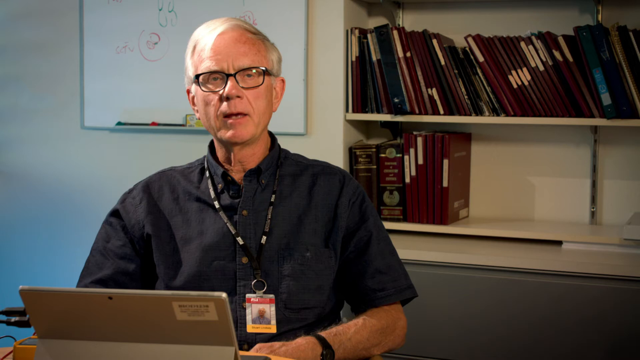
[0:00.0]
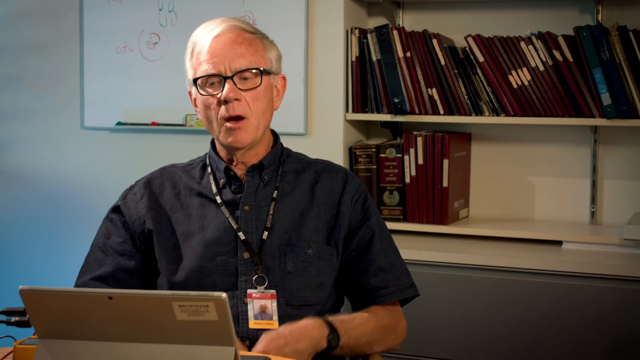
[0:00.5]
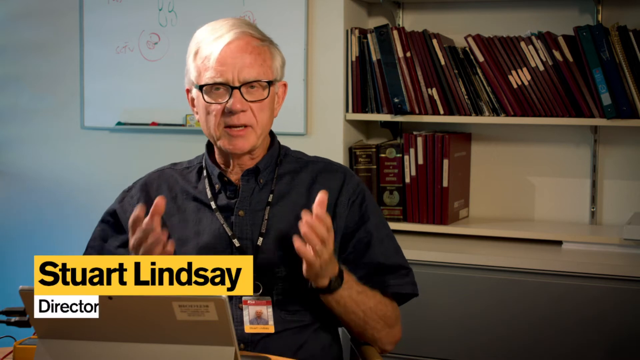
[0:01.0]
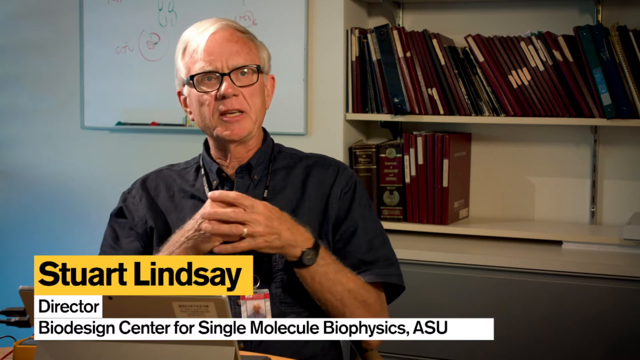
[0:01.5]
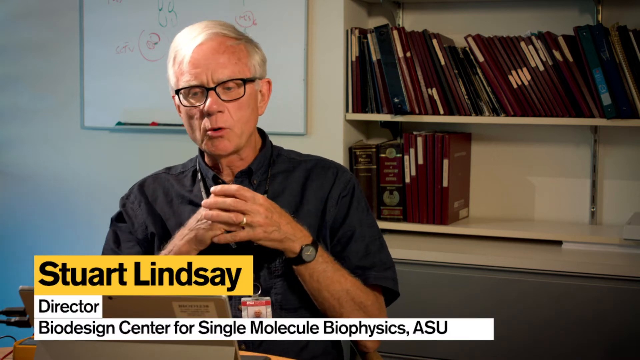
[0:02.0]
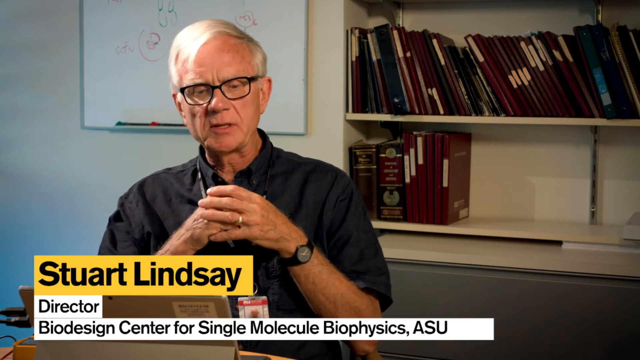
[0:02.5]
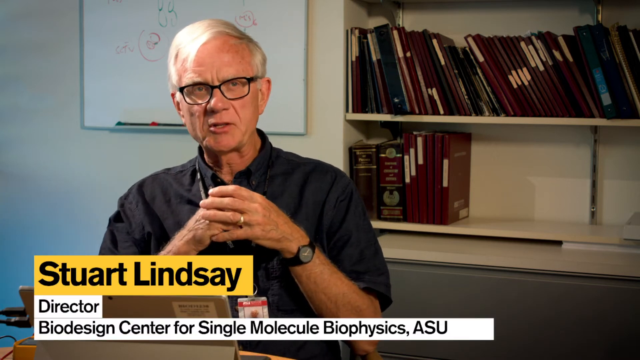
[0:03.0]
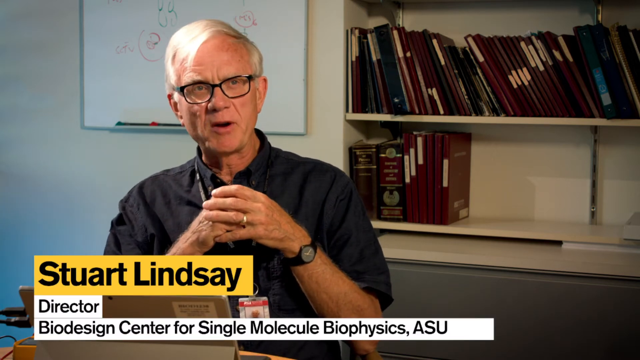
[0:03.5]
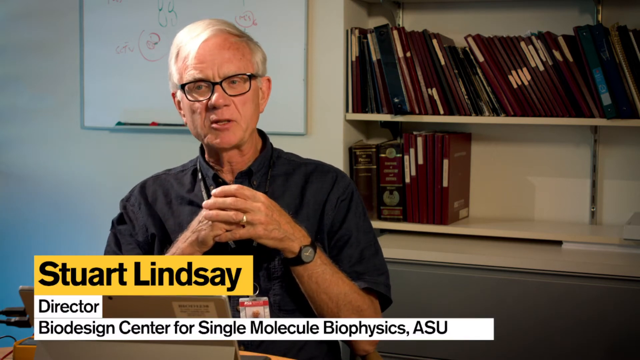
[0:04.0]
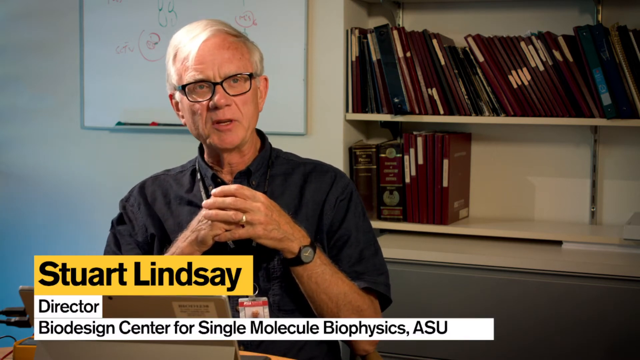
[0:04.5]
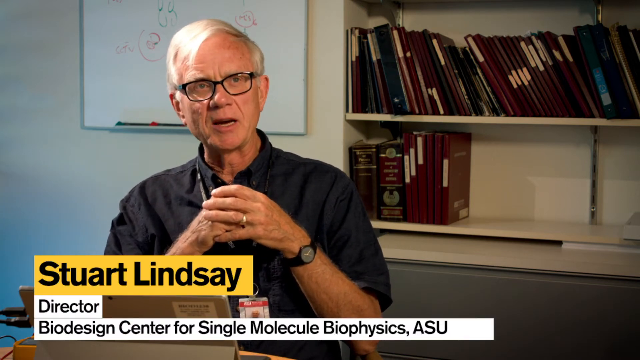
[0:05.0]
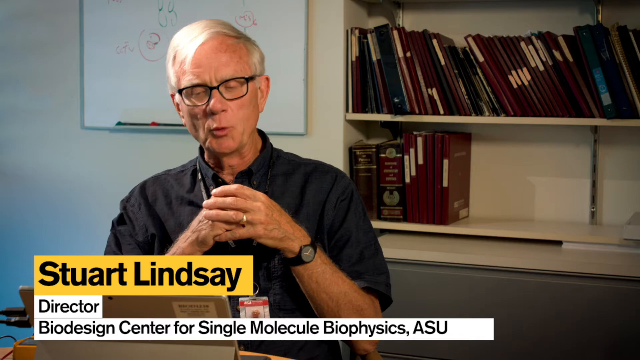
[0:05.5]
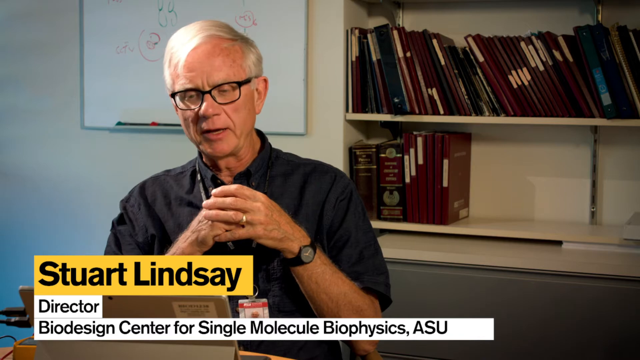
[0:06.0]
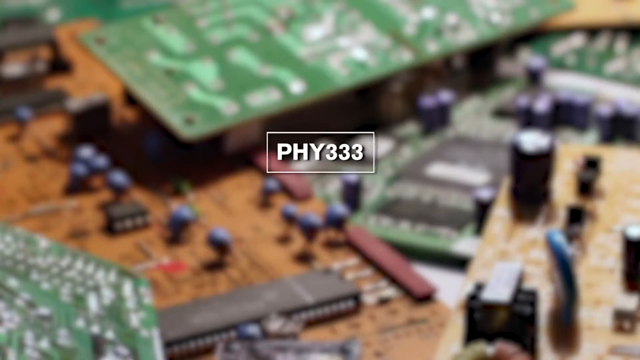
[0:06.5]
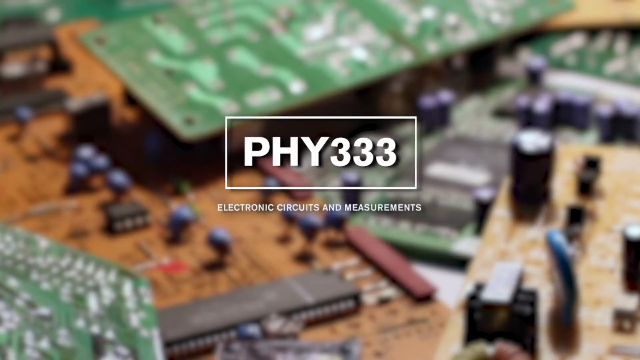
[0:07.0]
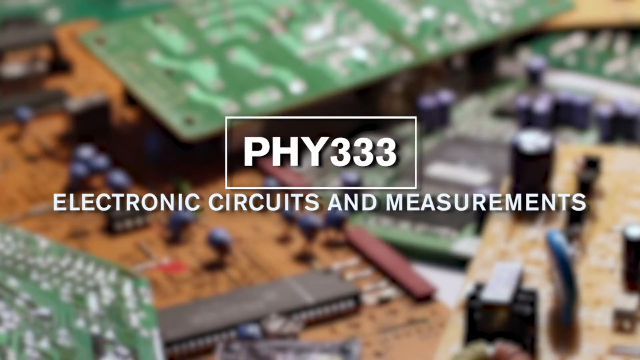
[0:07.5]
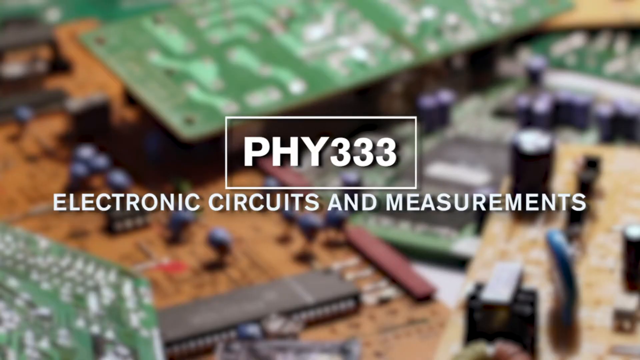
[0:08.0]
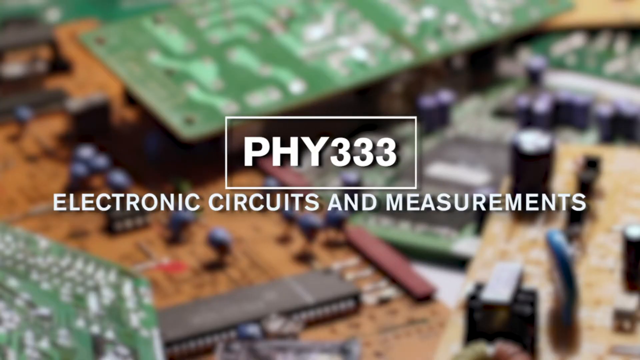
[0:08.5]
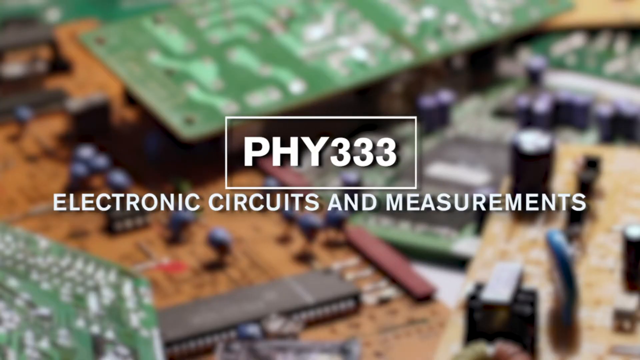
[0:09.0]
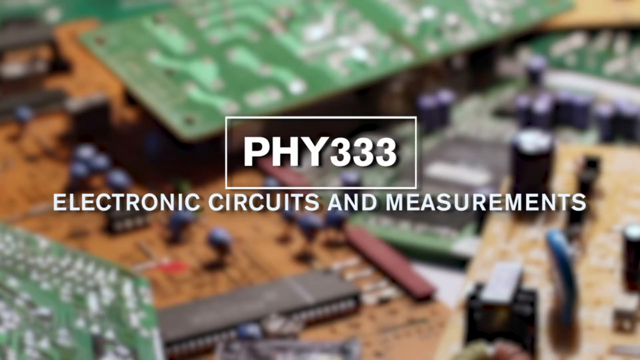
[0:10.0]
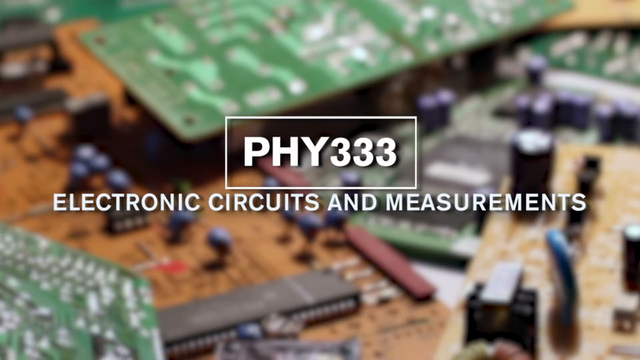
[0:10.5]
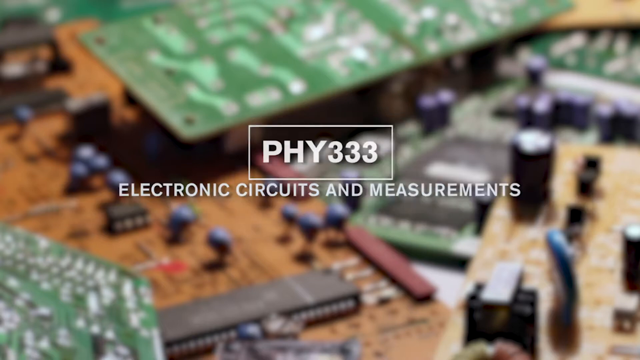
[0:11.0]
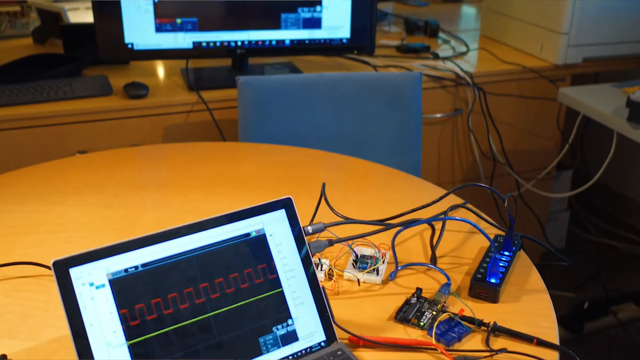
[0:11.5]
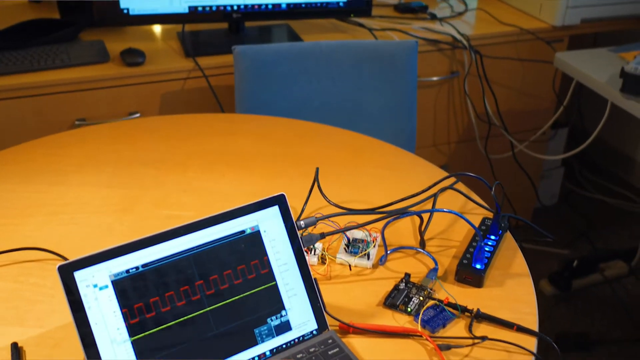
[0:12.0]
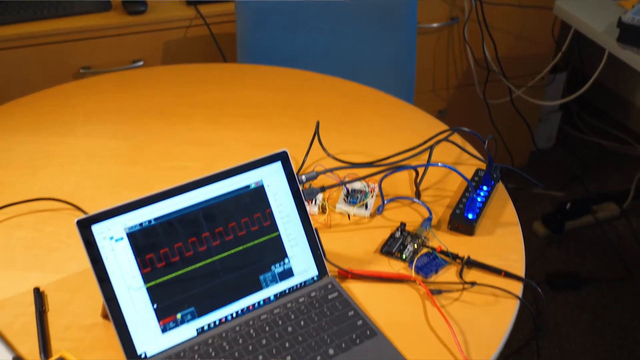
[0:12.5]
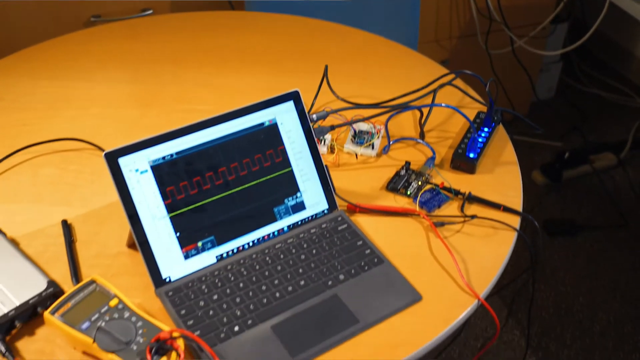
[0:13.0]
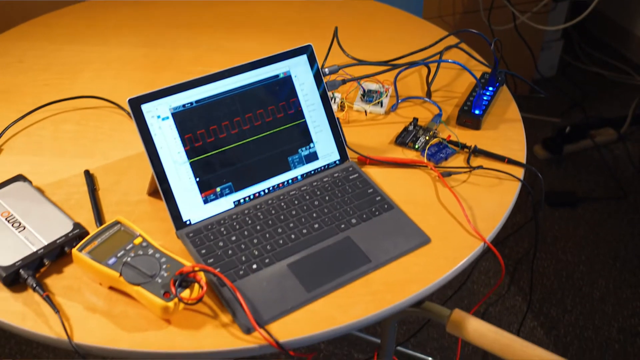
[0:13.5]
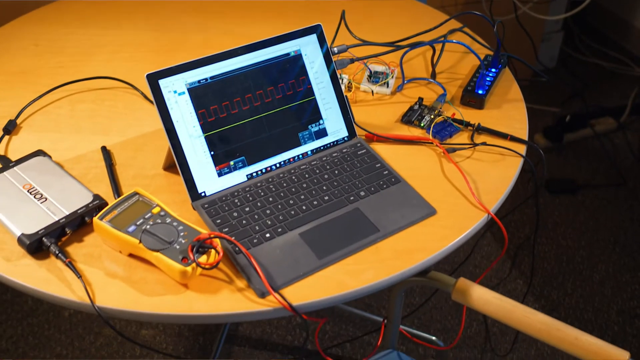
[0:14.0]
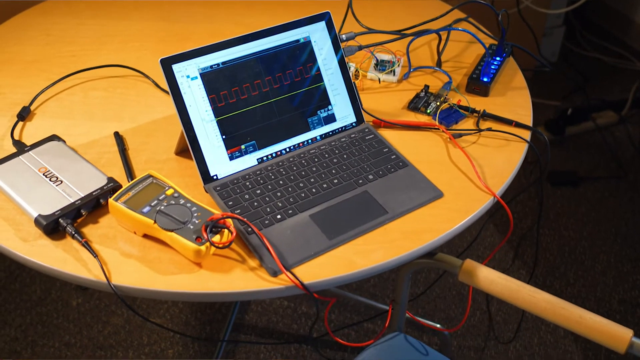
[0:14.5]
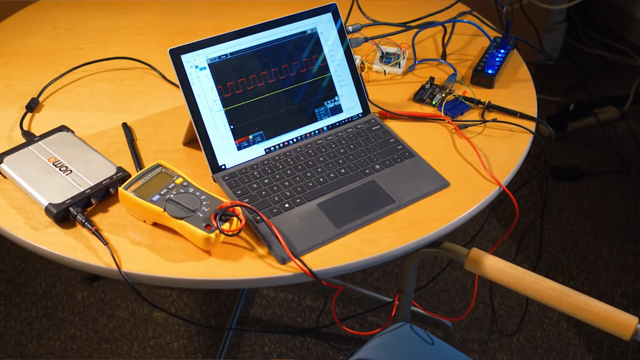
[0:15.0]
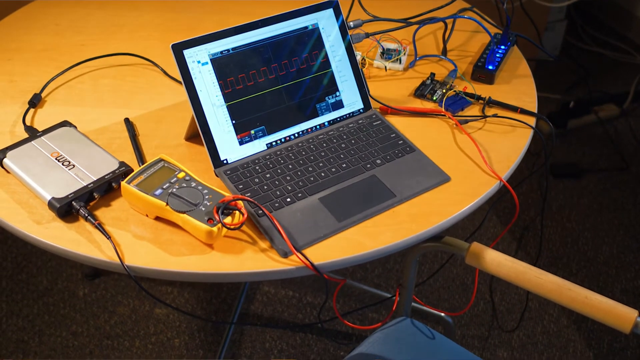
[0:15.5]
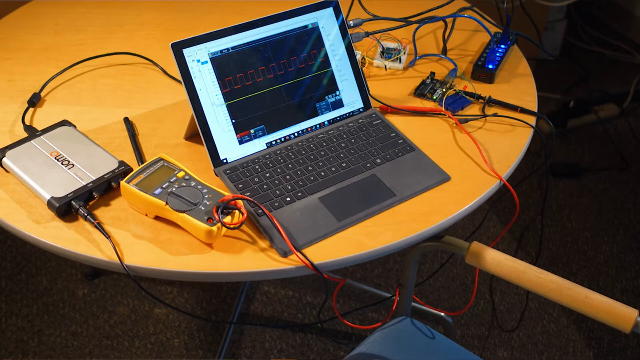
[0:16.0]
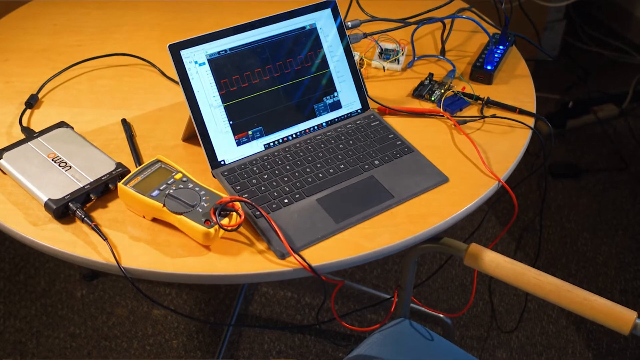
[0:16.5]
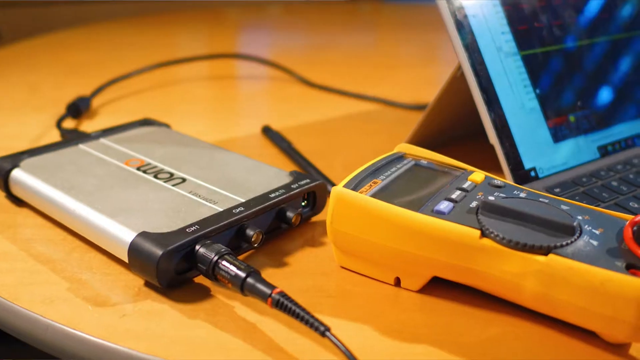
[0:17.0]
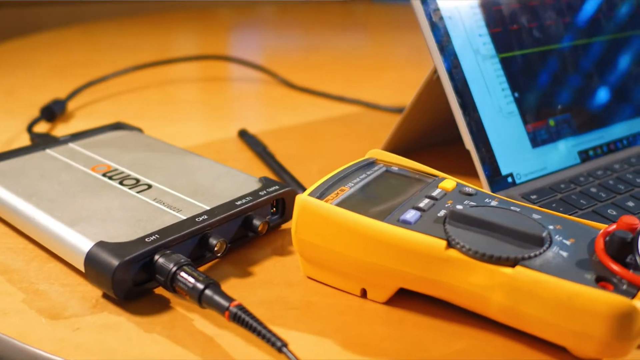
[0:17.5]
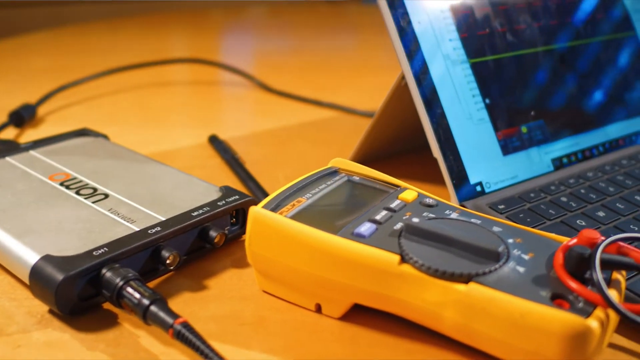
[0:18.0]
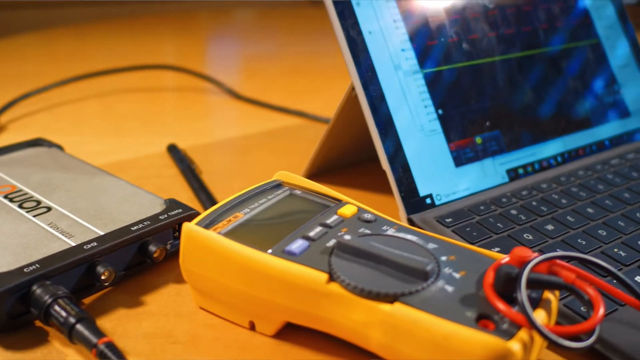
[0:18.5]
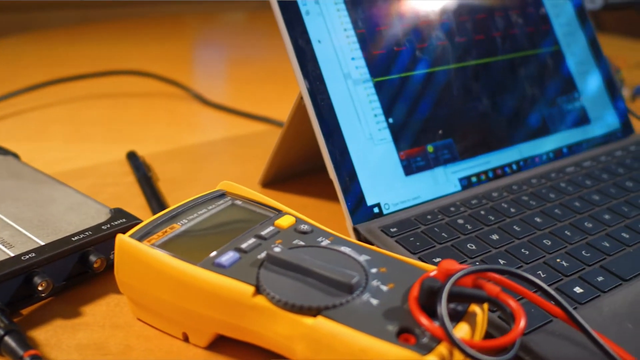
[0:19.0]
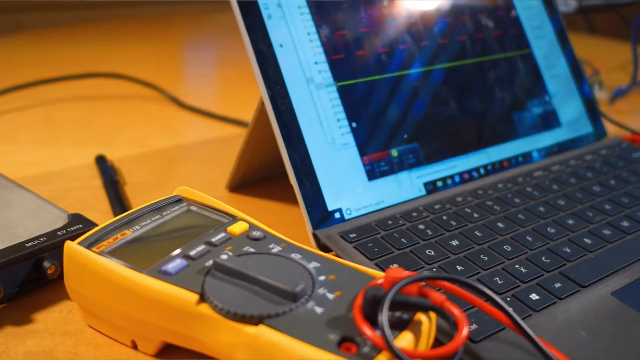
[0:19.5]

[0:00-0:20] A man, Stuart Lindsey, Director of Biodesign Center for Single Molecule Biophysics, has white hair and wears a black shirt, with a name badge on a lanyard around his neck. Text reads "ASU", "Arizona State University" and "PHY 353, electronic circuits and measurements." A table holds a laptop plugged into some kind of hardware, with many things plugged into each other, including a yellow thing with a dial on it and an orange wire, and a silver thing with black on the edges, also plugged in, bearing unreadable text. There is a pin on the round table. Behind him is a white wall with a whiteboard and some pins resting on it, and to his left (the viewer's right) are maroon-colored books. He talks a little with his hand.